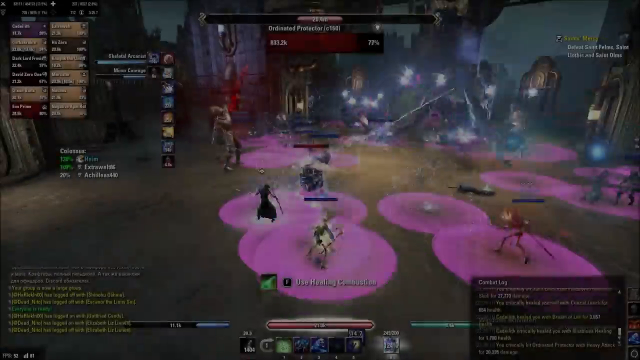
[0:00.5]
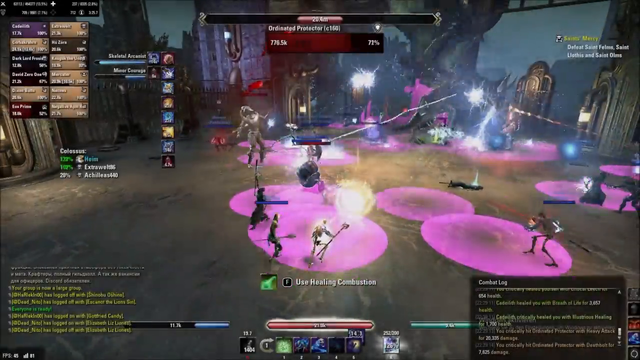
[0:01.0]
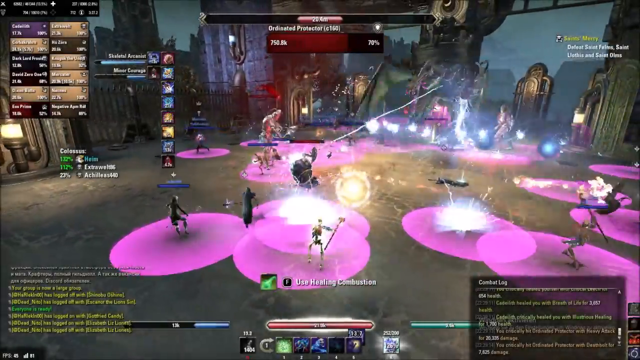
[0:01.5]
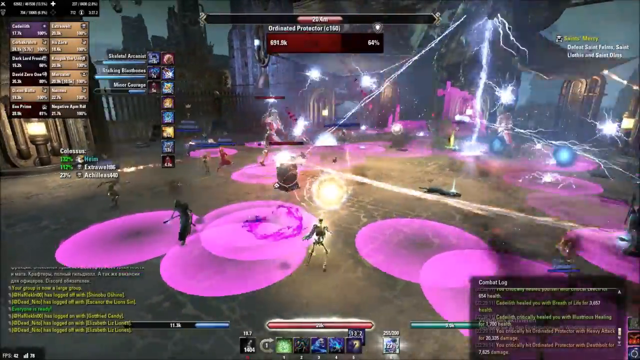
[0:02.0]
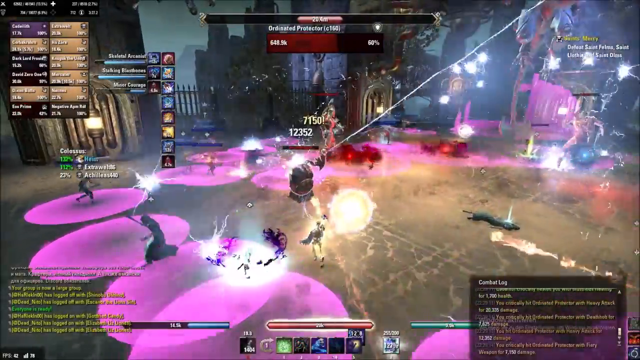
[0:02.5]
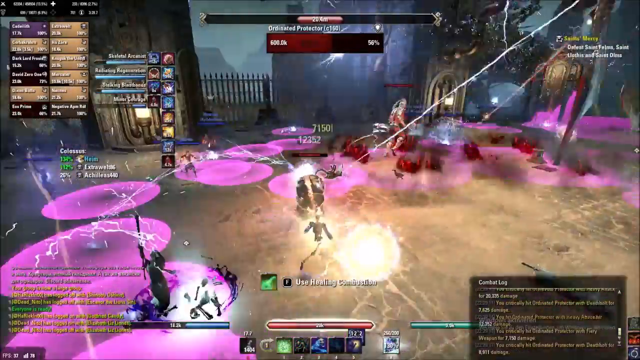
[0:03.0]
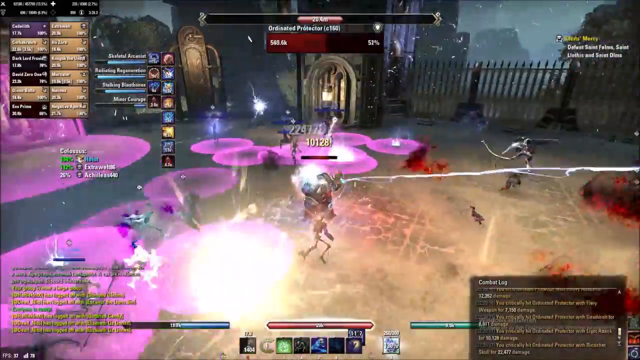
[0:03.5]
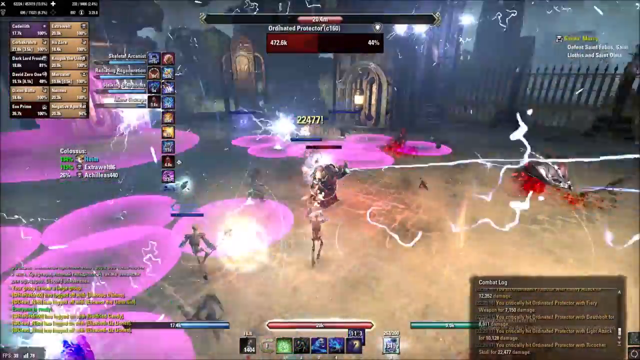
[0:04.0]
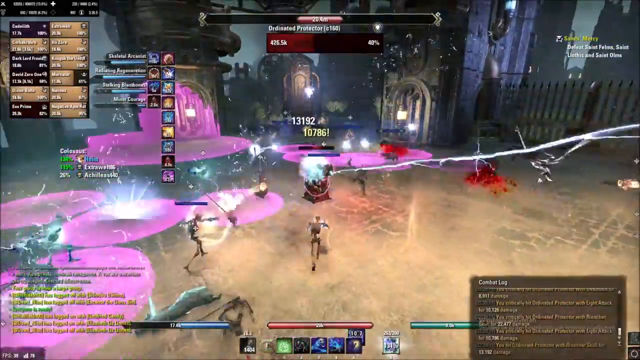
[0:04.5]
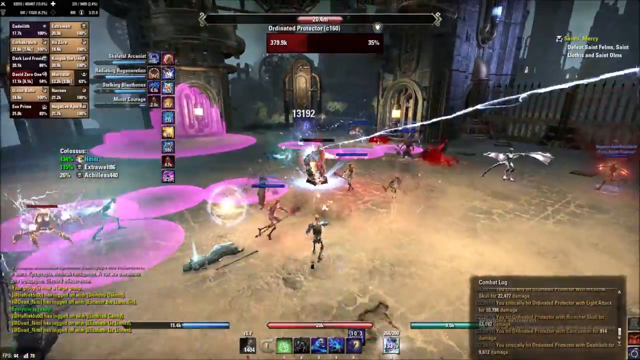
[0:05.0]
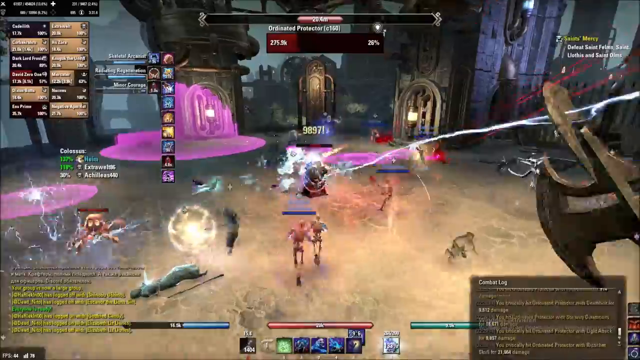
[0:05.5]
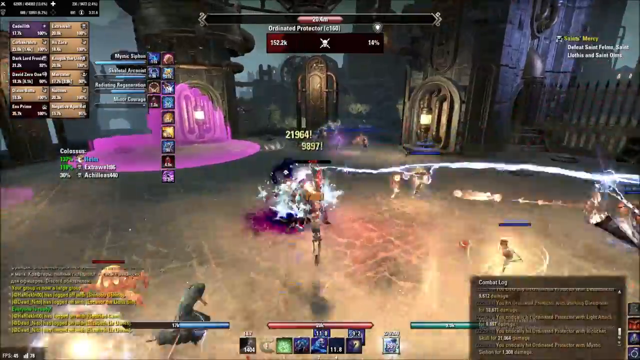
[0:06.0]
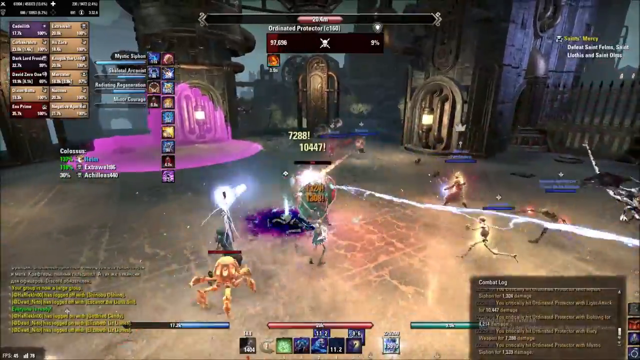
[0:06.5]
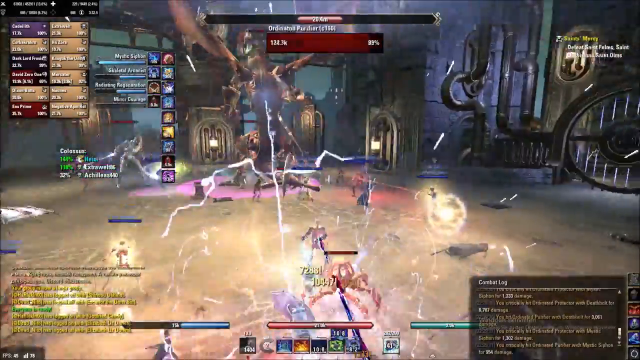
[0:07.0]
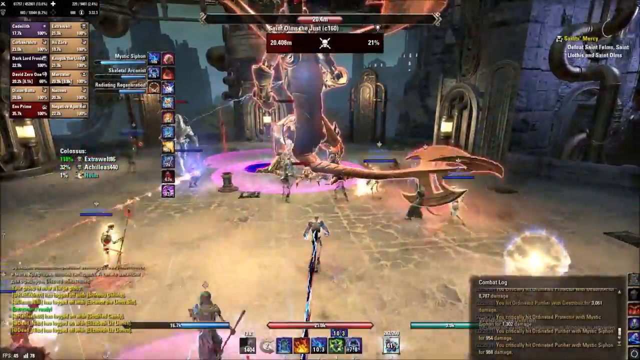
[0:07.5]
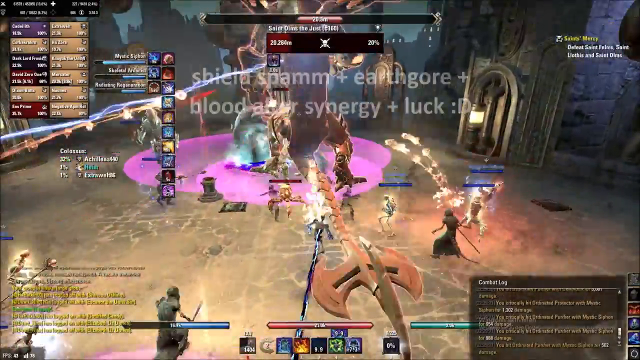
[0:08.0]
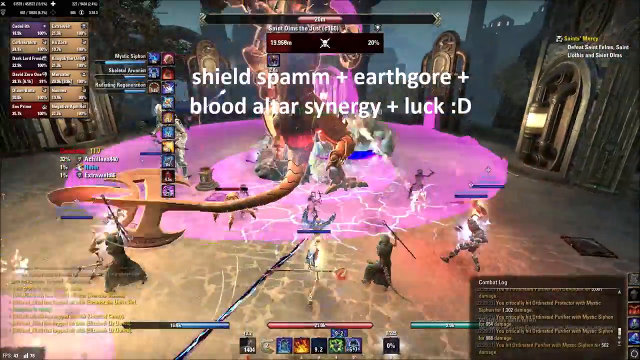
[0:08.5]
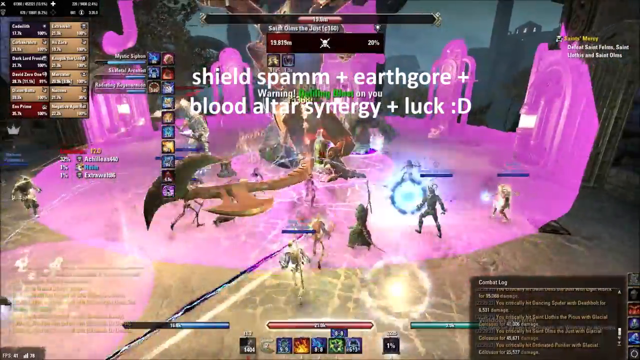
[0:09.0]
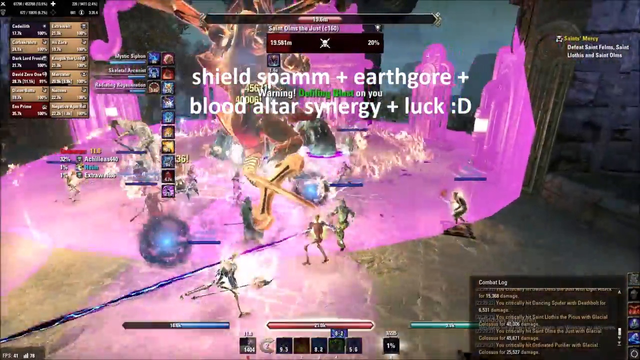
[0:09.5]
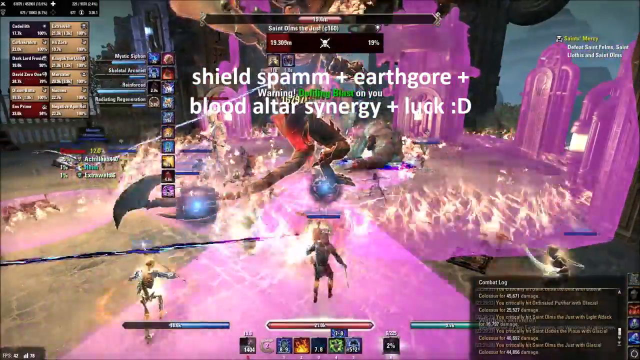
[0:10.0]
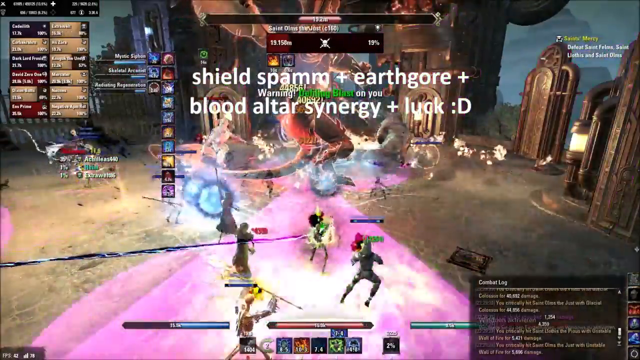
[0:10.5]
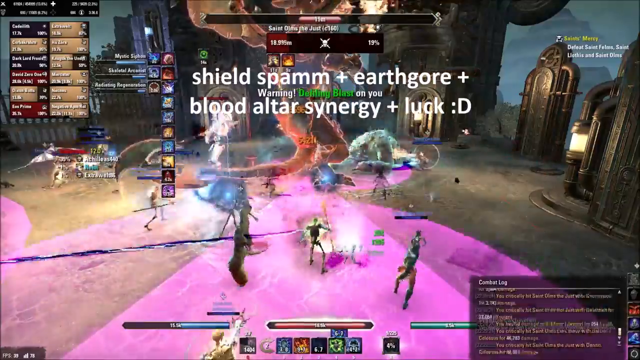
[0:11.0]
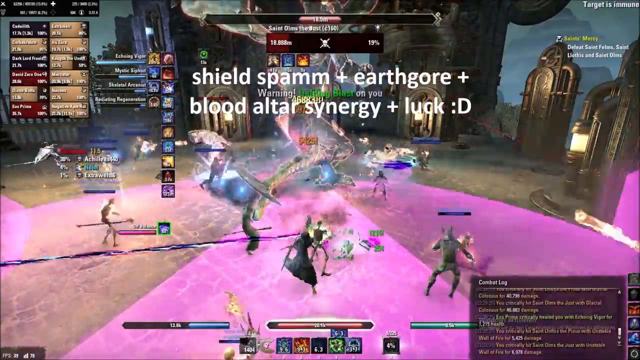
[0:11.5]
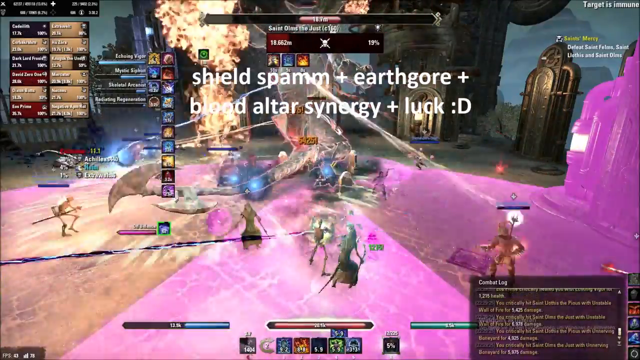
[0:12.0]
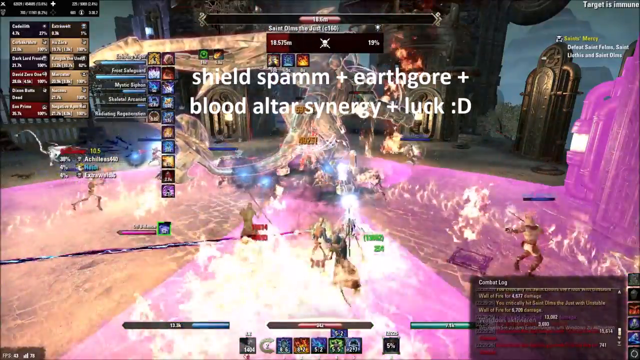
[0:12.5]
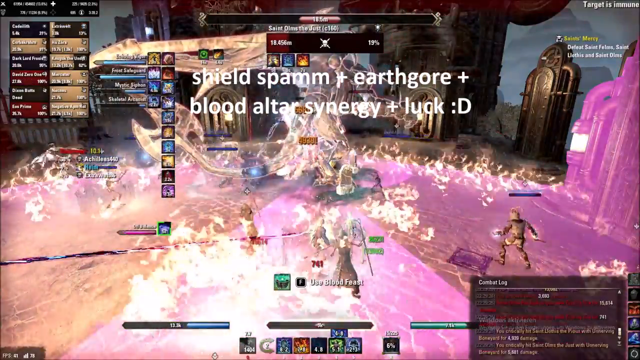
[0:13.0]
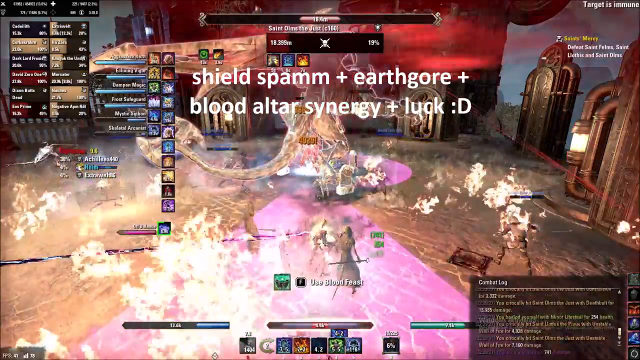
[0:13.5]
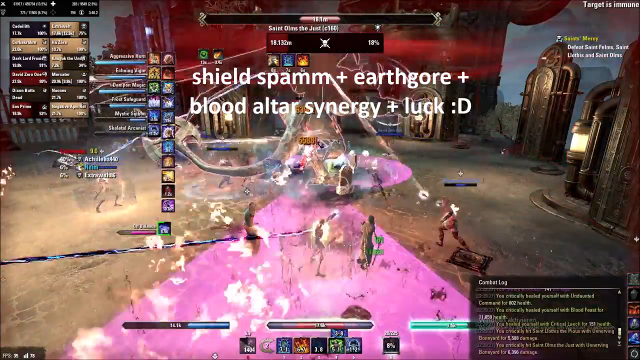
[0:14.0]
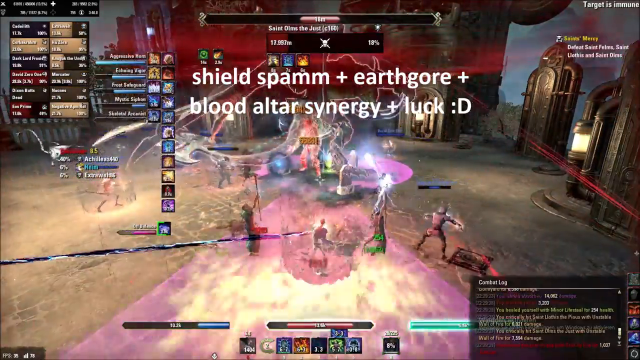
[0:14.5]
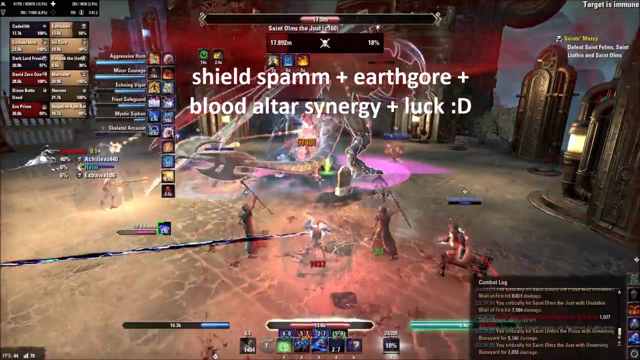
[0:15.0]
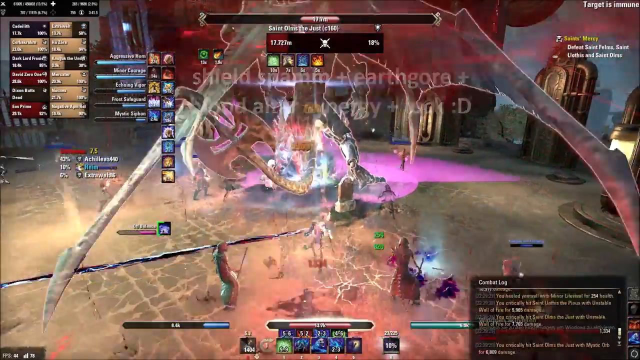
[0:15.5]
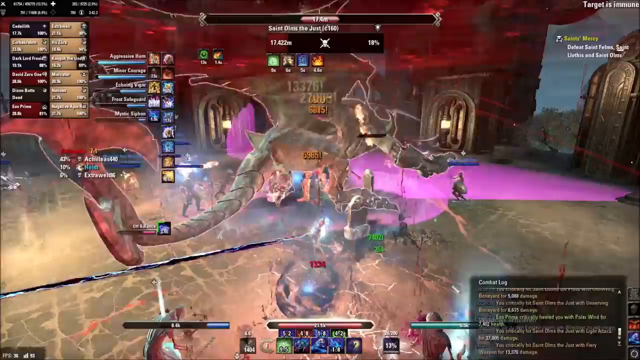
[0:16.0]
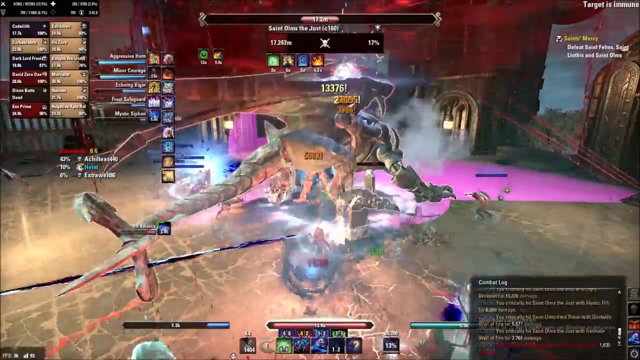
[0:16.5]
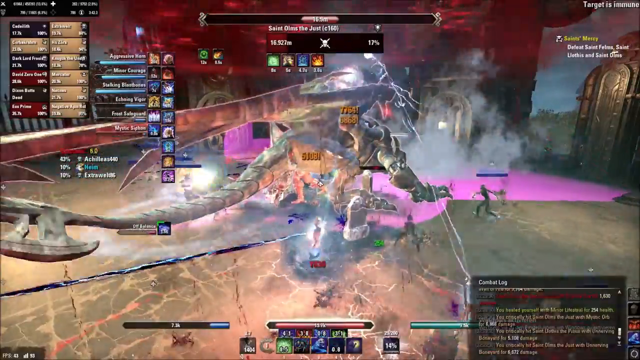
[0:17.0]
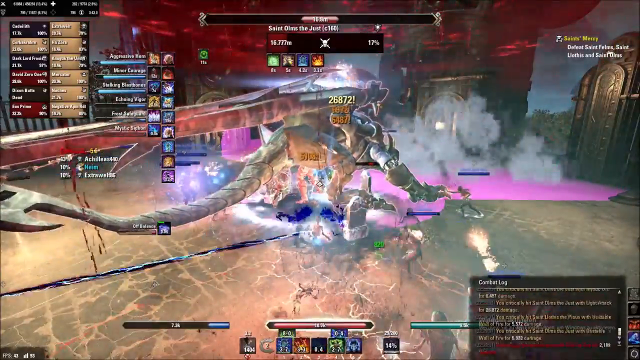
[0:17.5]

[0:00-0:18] Gameplay from some kind of massively multiplayer online video game fills the view. Many players run around using abilities and spells to attack non-player character monsters. They appear to be working as a team against a large dragon that is emitting lots of fire, with all of the players launching lots of abilities at it. Lots of numbers come up on the screen, presumably representing the damage being done to the dragon. In the top left of the screen is what appears to be some kind of menu, apparently representing certain abilities the player is using, or the players in this lobby taking part in the battle. At the top of the screen is a large health bar representing the health of the dragon everybody is fighting. Several pieces of text in the top right and bottom right represent different logs and pieces of information. Text also appears on the screen that could possibly be some kind of streaming donation, and in-game warning text pops up on the screen.